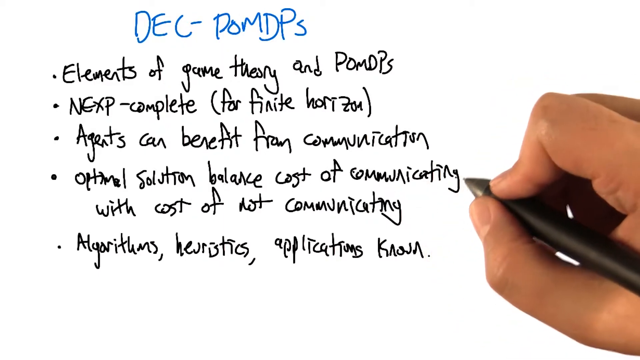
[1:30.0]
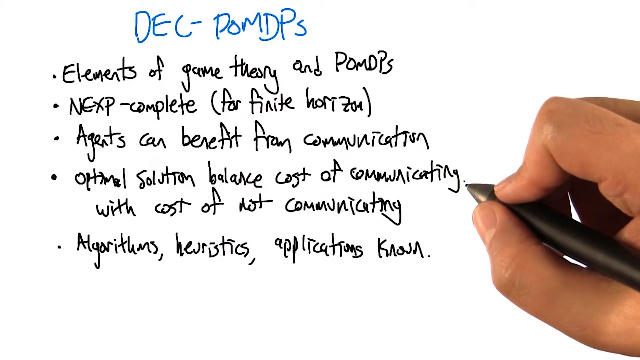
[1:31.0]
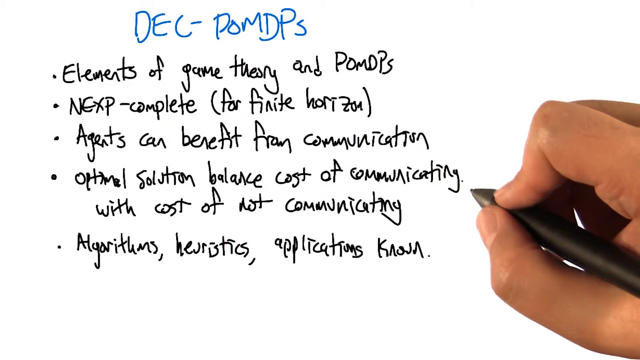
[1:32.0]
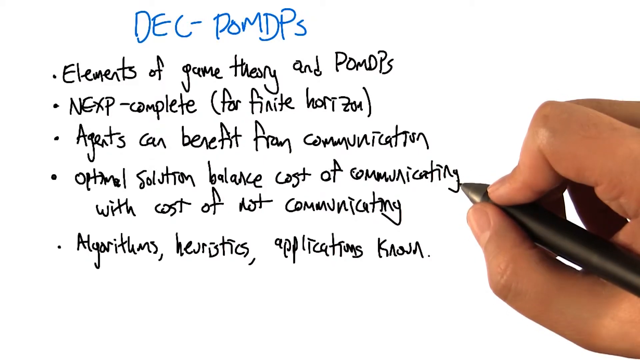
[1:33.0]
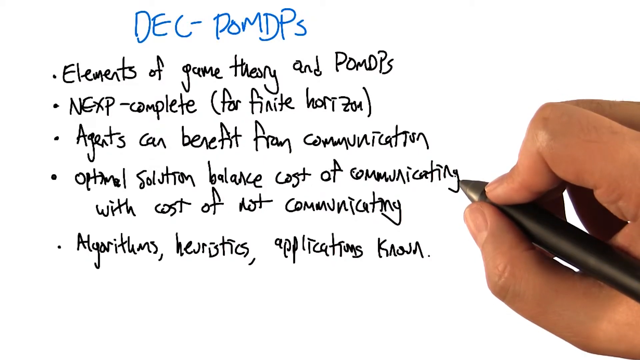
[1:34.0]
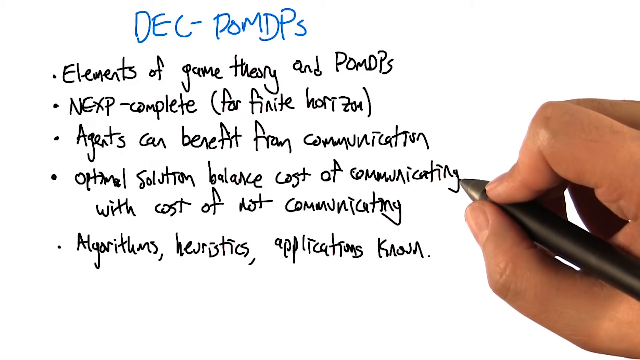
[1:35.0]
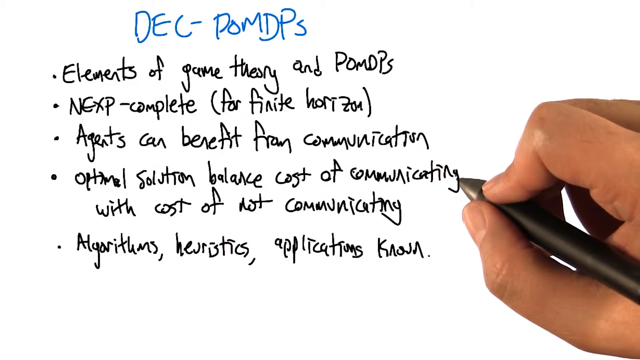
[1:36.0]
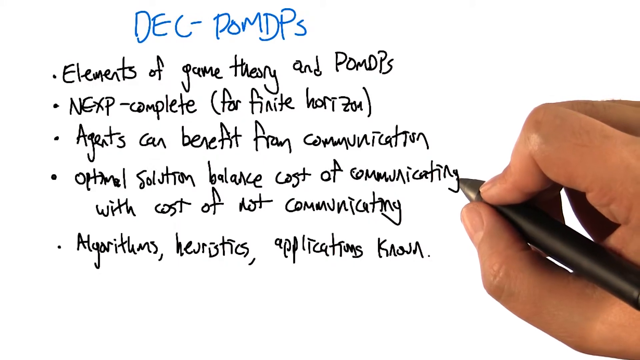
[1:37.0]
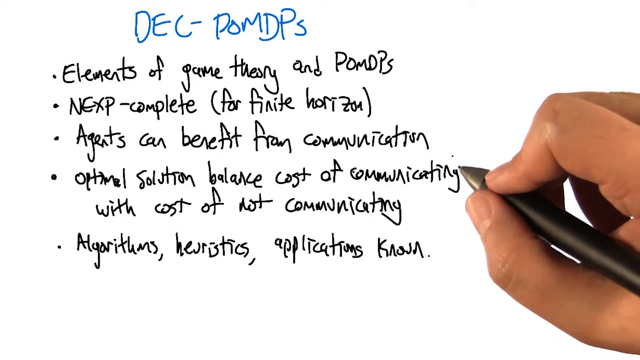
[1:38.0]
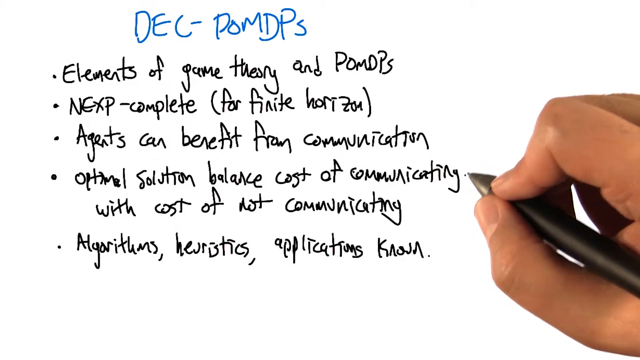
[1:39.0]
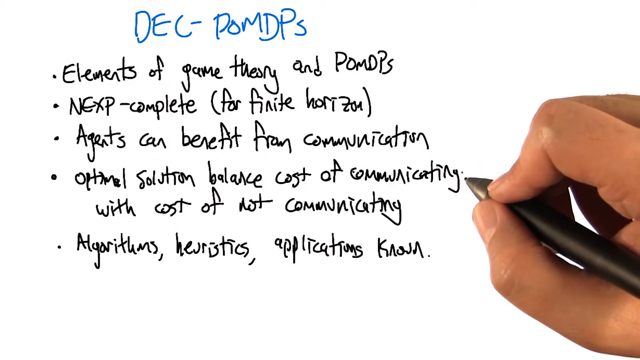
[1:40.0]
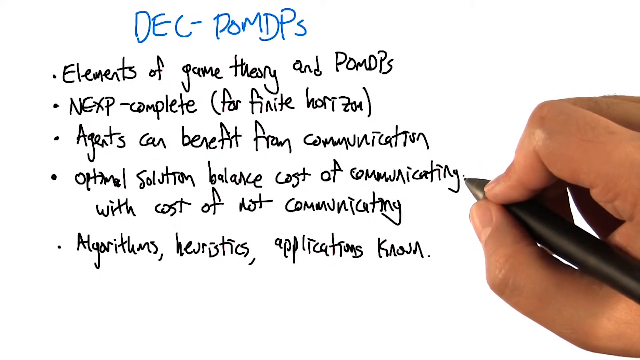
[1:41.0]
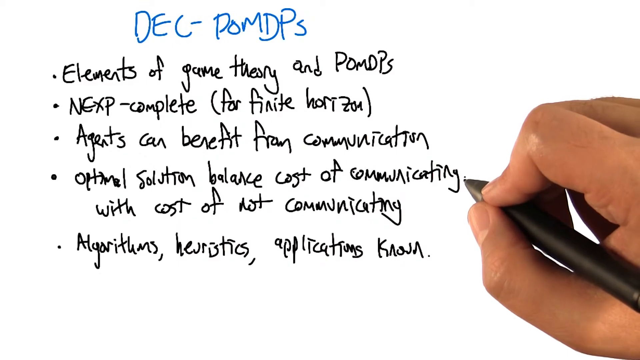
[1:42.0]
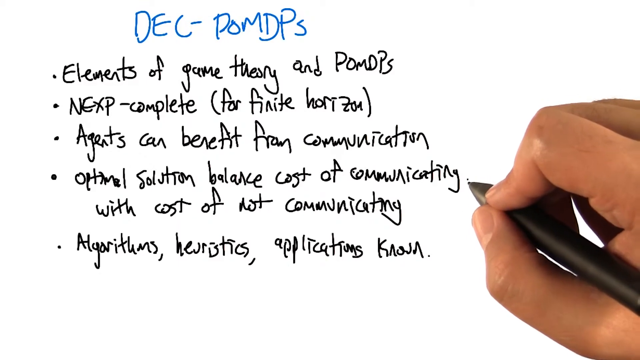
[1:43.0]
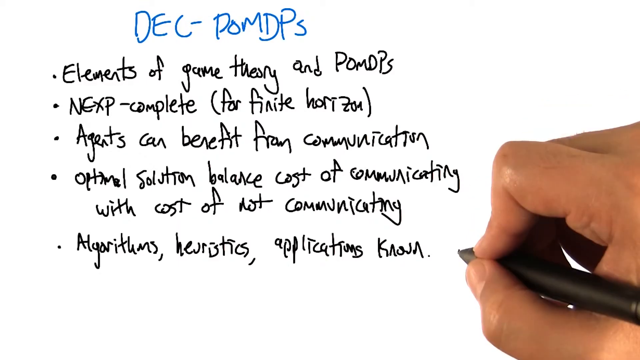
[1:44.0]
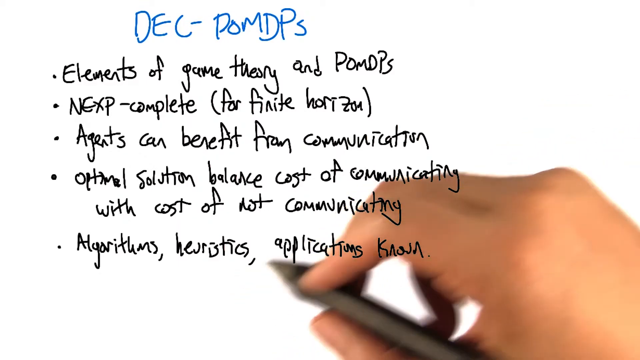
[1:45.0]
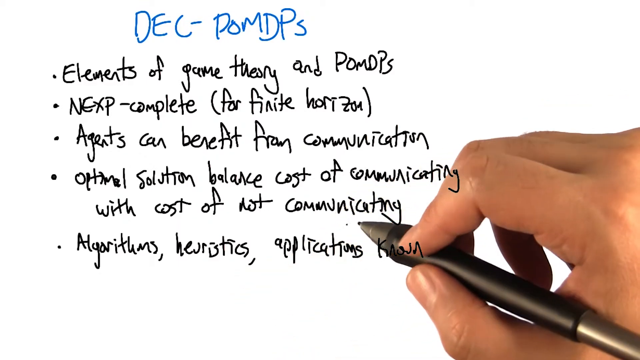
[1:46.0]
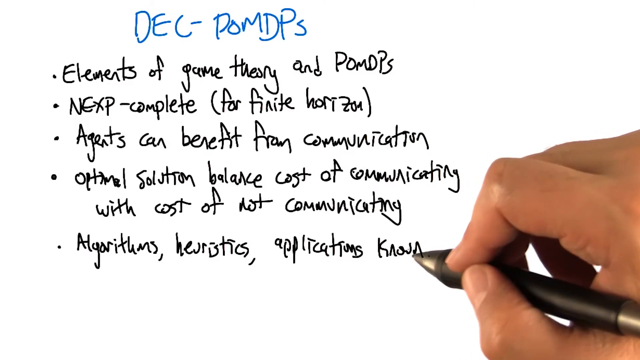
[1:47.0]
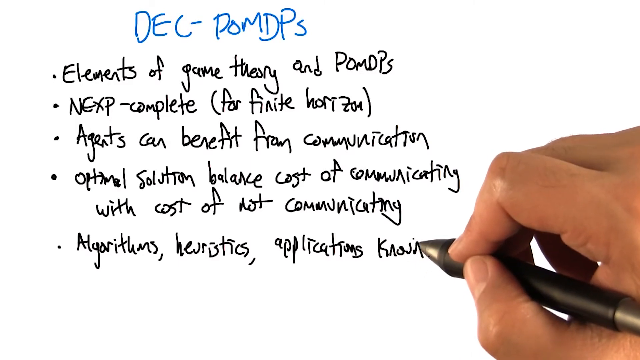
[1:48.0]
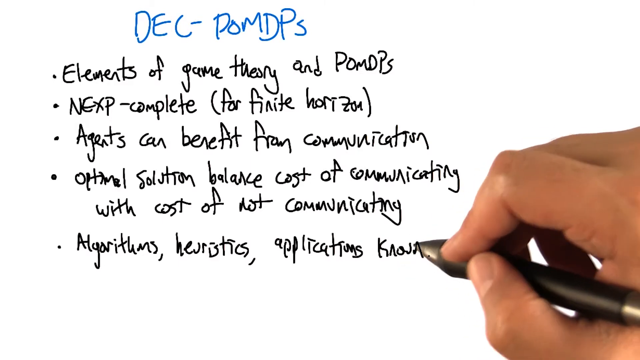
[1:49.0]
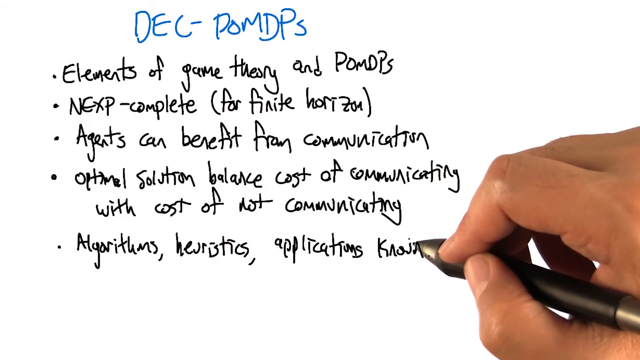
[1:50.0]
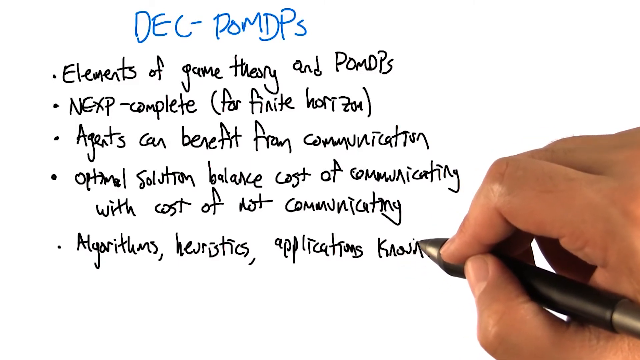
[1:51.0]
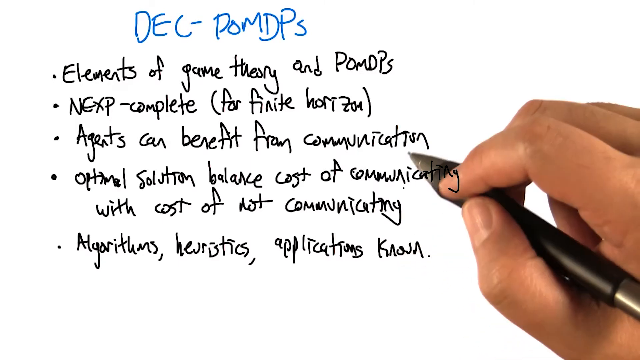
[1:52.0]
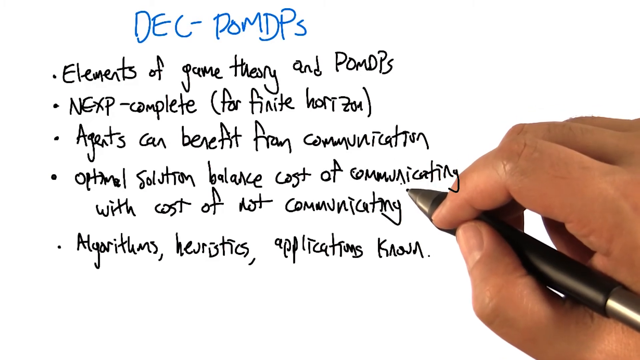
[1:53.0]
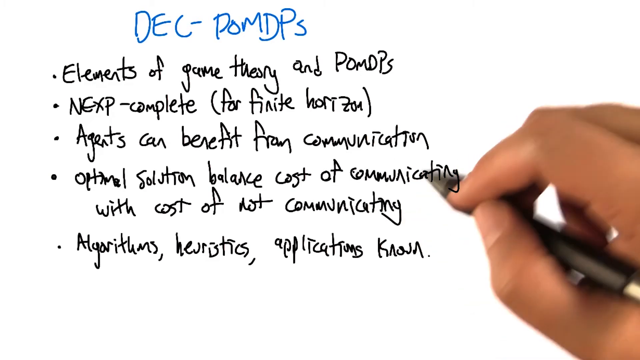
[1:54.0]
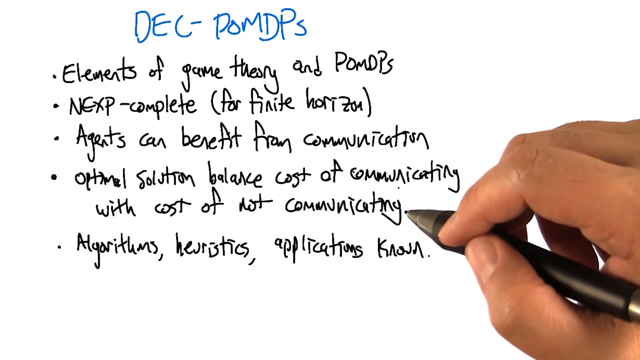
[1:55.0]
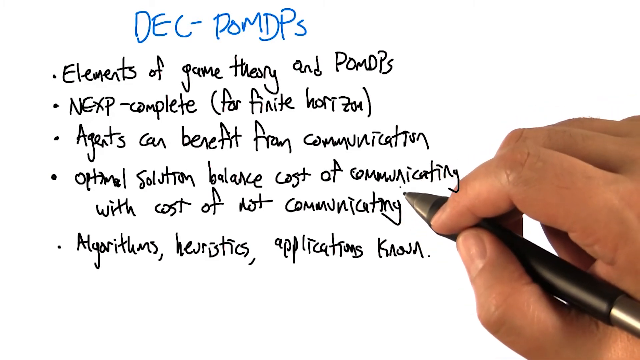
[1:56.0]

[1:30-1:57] The person is now on the line "algorithms, heuristics, and applications known". He keeps pointing back to the previous sentences, apparently linking one sentence to another. No visible progress in the writing can be seen.